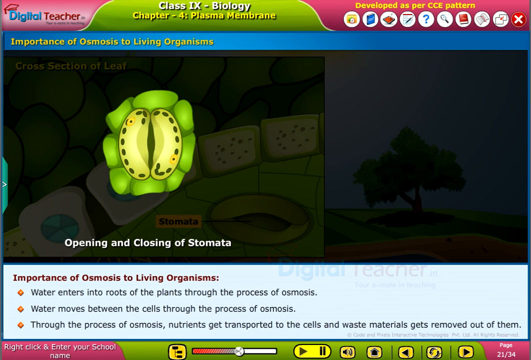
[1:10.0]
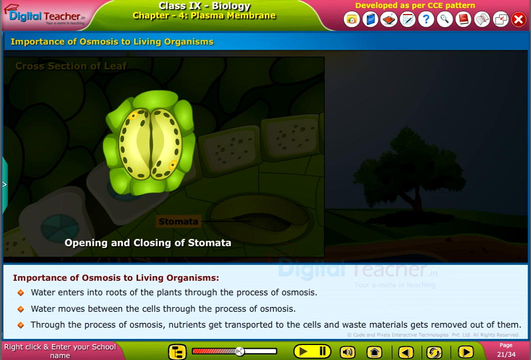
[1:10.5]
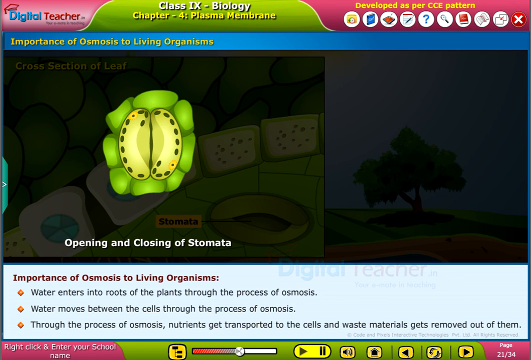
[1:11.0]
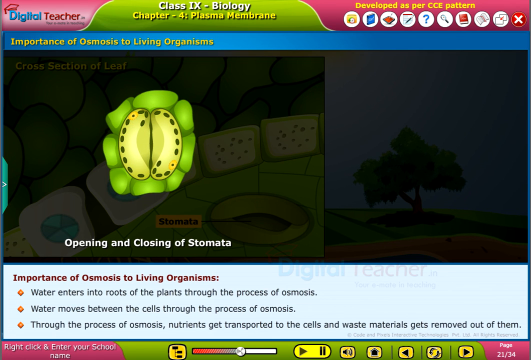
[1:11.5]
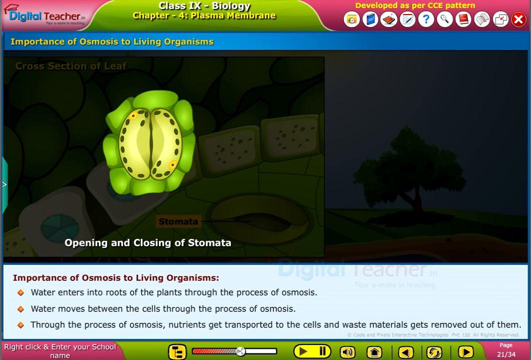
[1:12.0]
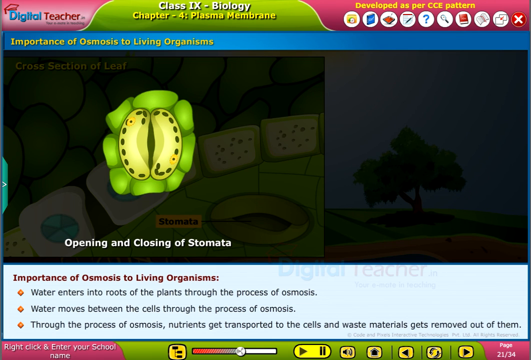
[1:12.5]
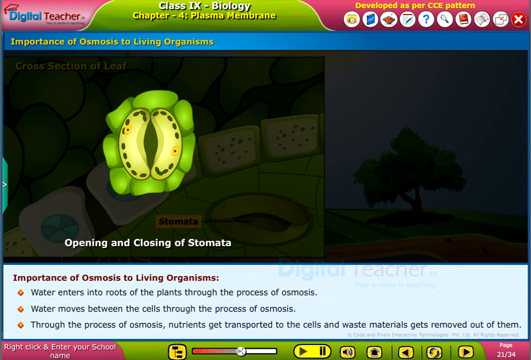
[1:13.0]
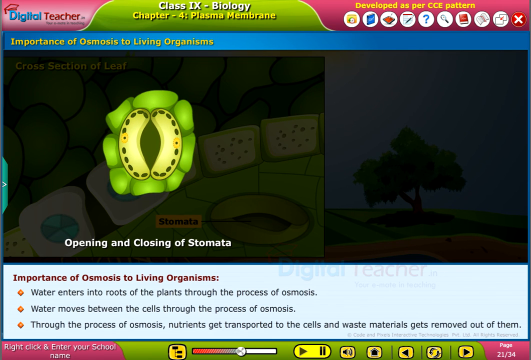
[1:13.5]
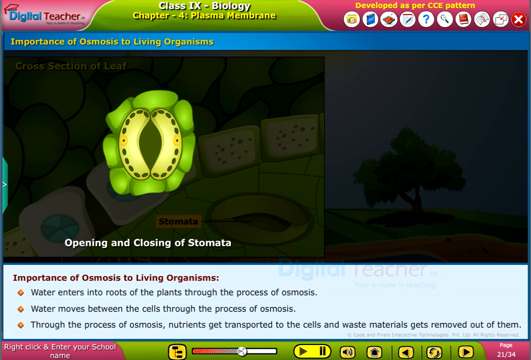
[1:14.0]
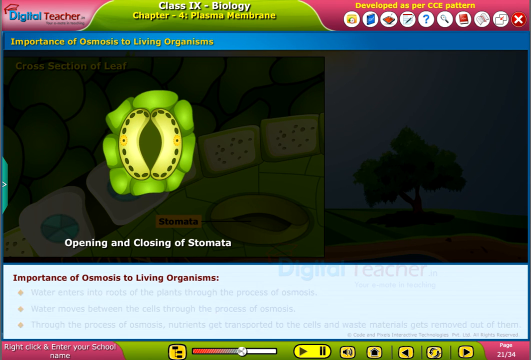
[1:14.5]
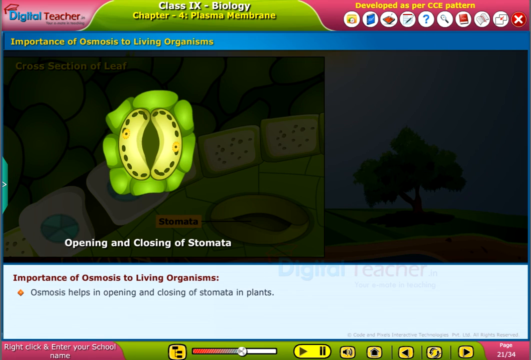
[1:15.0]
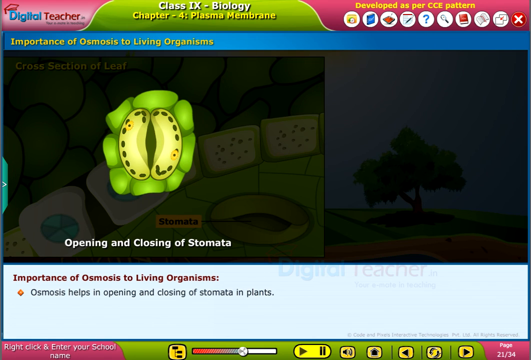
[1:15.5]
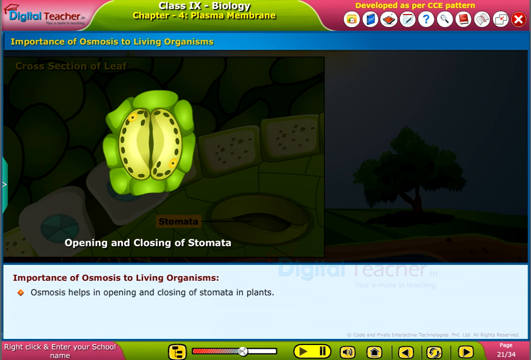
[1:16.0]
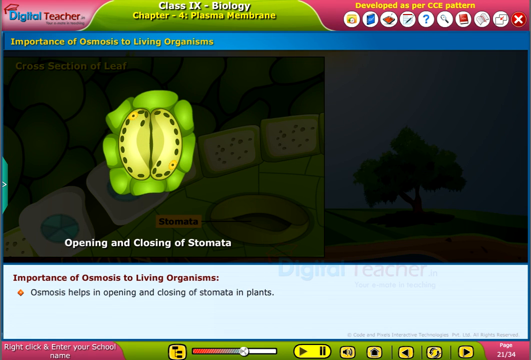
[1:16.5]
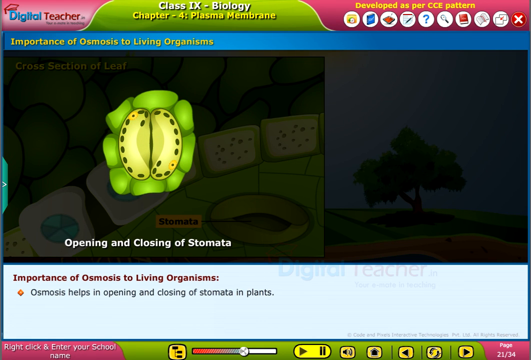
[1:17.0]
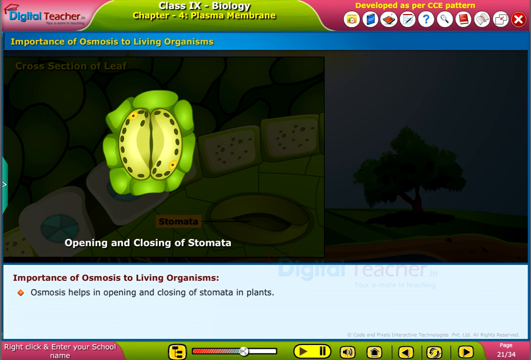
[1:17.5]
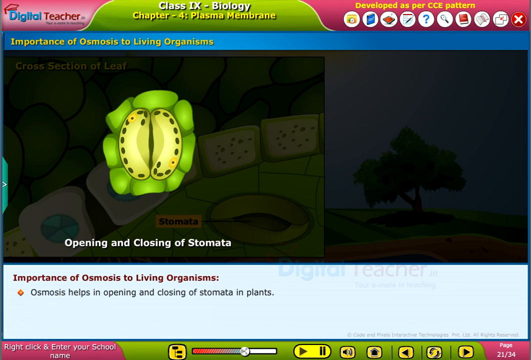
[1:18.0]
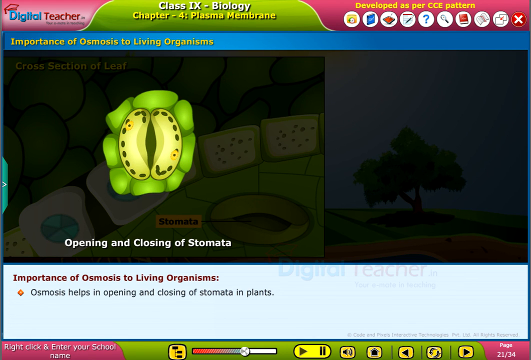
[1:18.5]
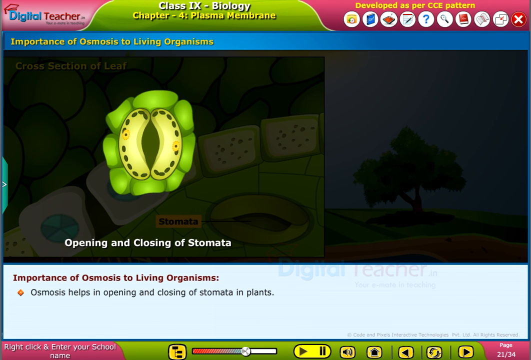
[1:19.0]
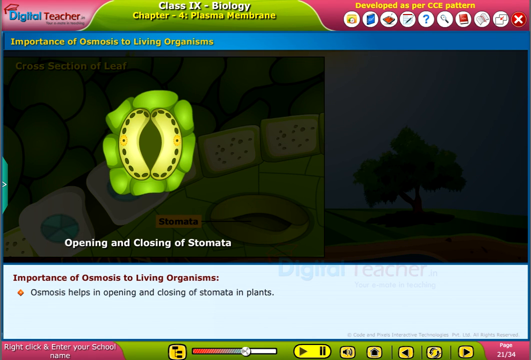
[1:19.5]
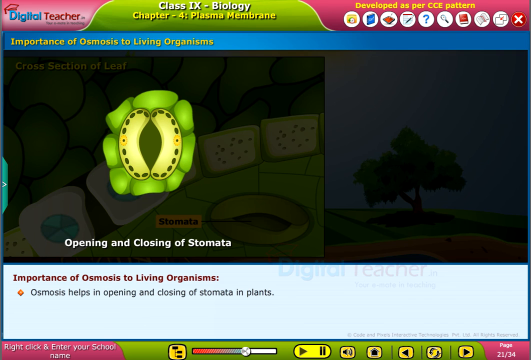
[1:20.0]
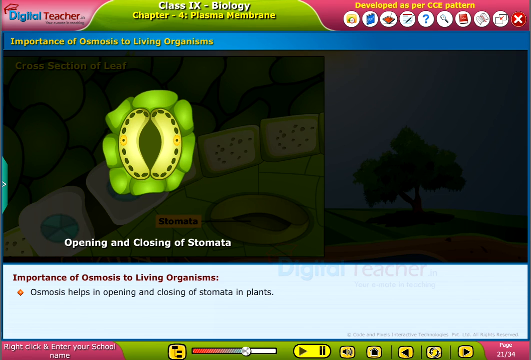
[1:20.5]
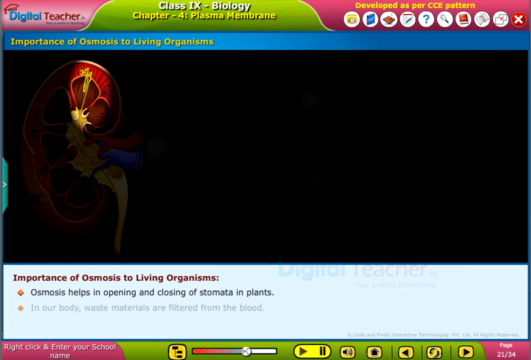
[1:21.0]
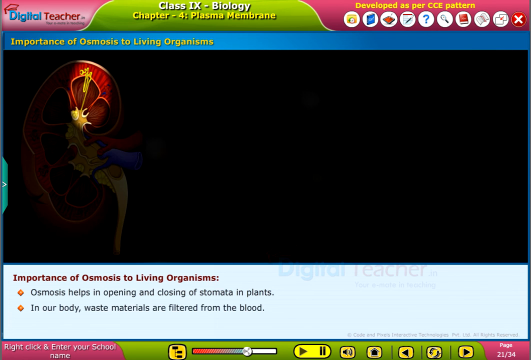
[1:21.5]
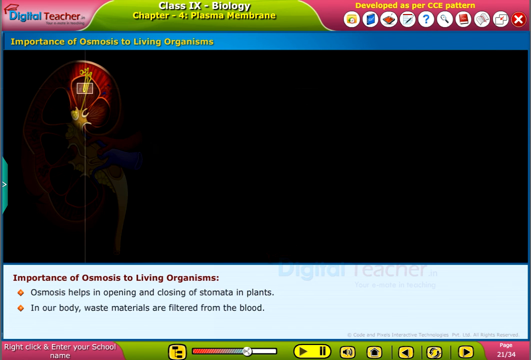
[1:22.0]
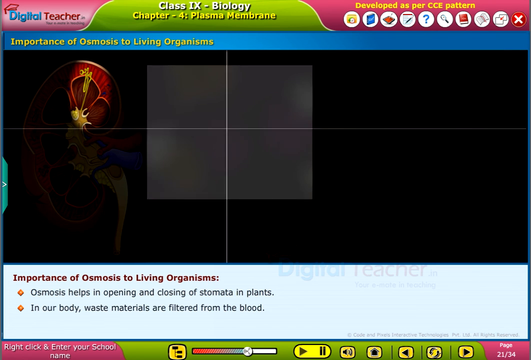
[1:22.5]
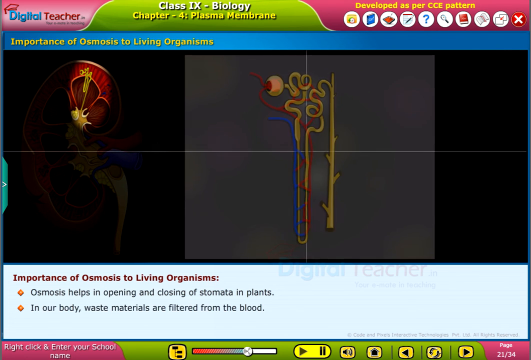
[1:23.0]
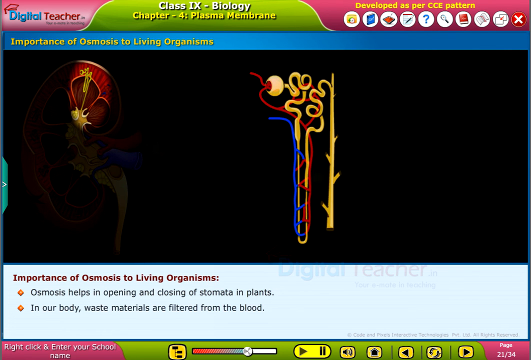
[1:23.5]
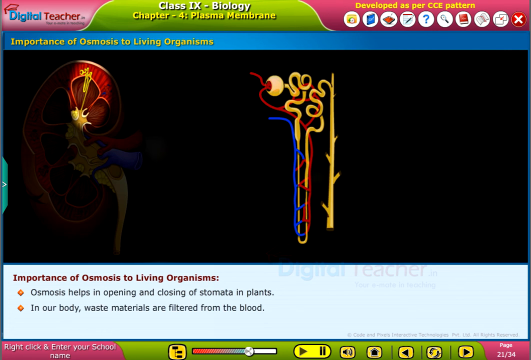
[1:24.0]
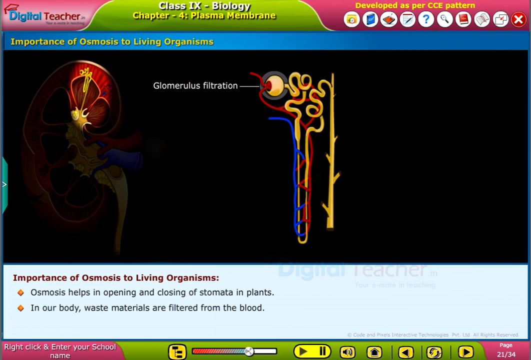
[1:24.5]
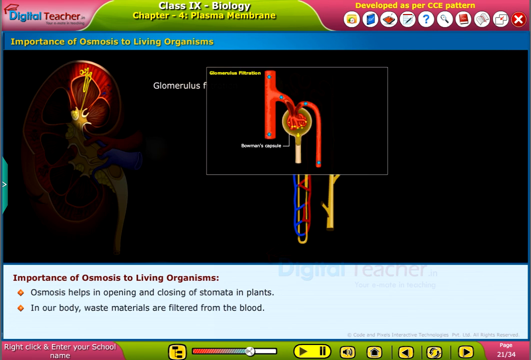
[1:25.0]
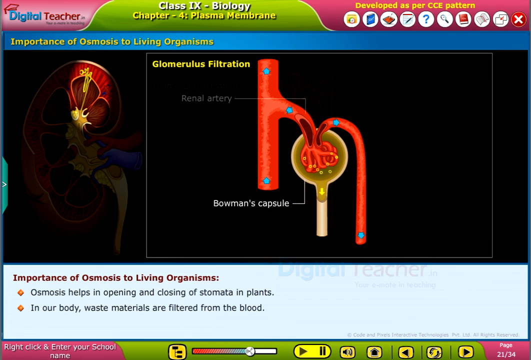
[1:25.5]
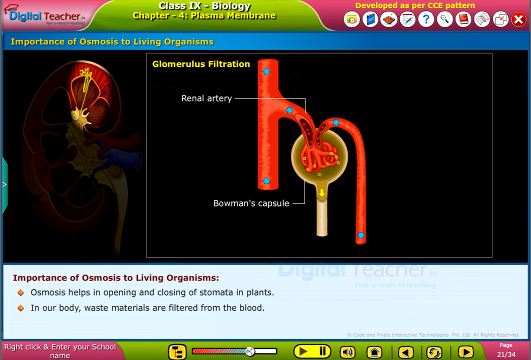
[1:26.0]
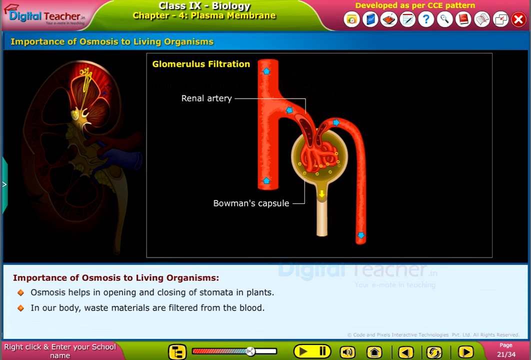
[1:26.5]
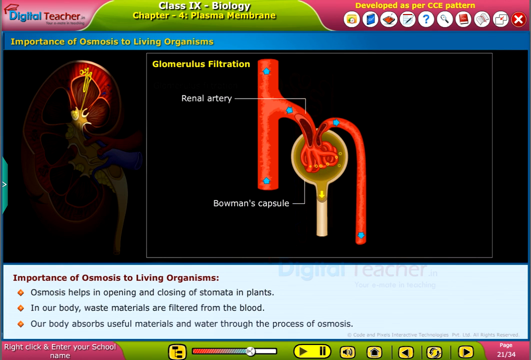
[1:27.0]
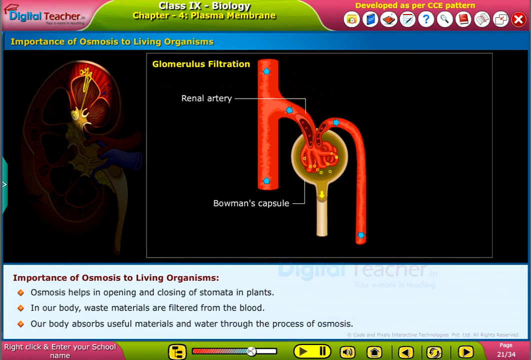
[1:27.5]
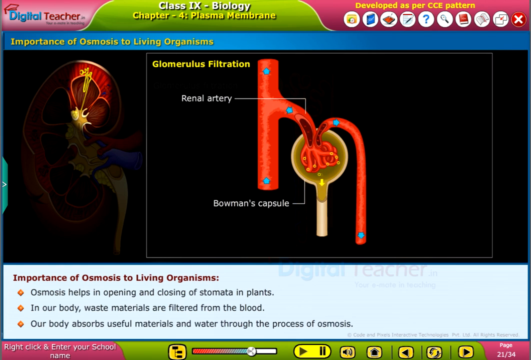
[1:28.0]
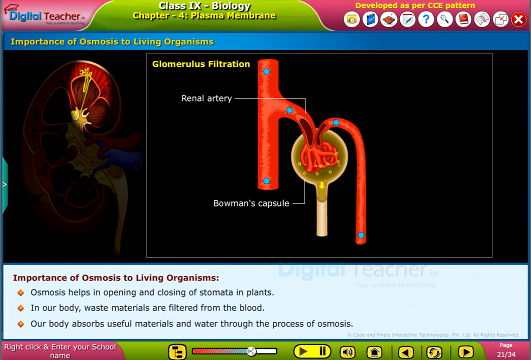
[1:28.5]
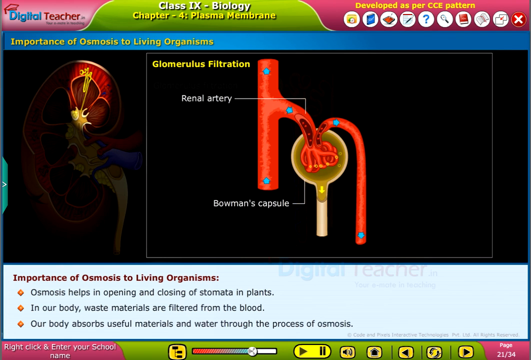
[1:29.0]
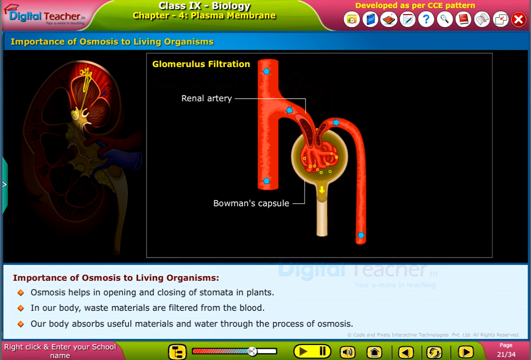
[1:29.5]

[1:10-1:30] The program, developed as per CCE pattern, shows Chapter 4, Plasma Membrane, The Importance of Osmosis to Living Organisms, The Opening and Closing of the Stomata, explaining that osmosis helps in opening and closing the stomata in plants. Inside the stoma, several green dots move around the inner part, and there are two light green circles with dark green circles inside. Next comes glomerulus filtration, with waste materials in the human body being filtered through the blood. The screen shows human organs and the process of osmosis. The glomerulus filtration graphic shows a red renal artery with three blue dots on it, followed by the Bowman's capsule, which is shaped like a candy cane and combines with the renal artery. Where they combine, several liquids filter through both and continually drop down into the Bowman's capsule where a gold arrow is located.